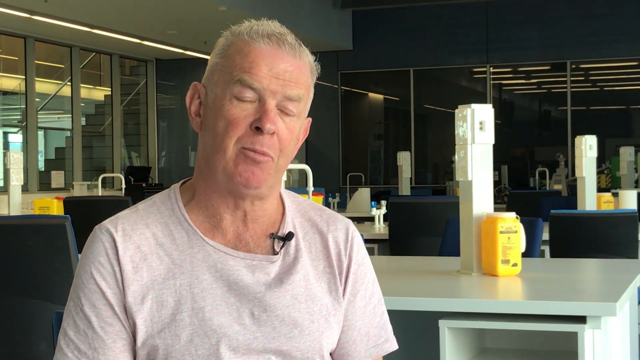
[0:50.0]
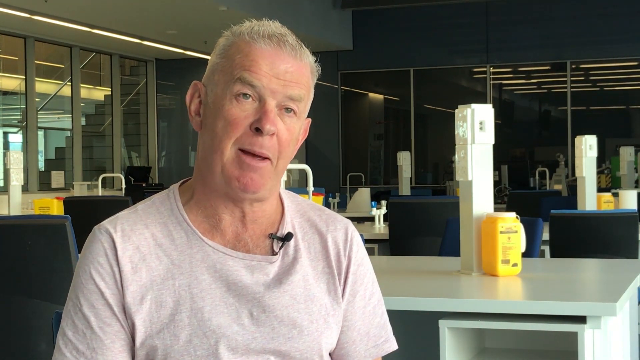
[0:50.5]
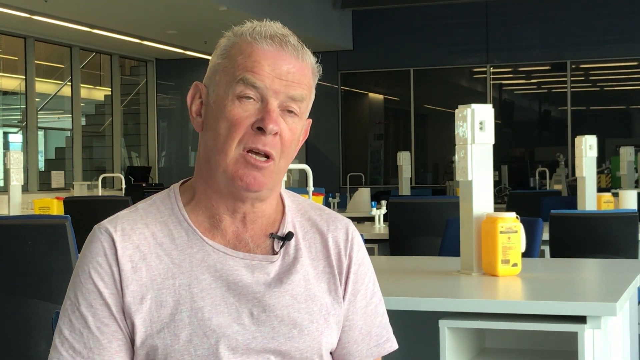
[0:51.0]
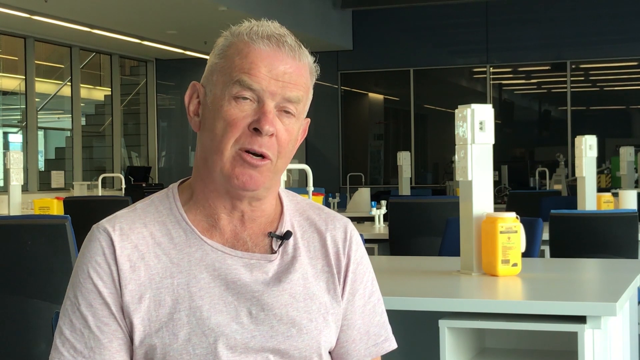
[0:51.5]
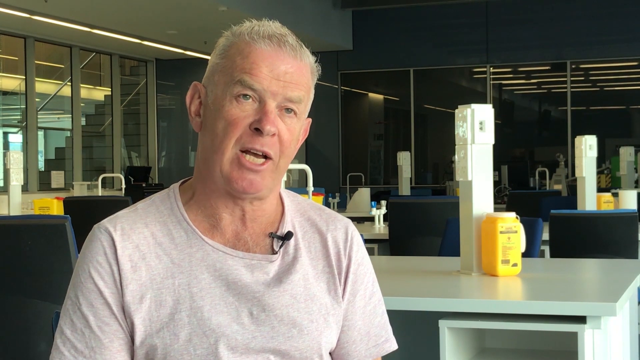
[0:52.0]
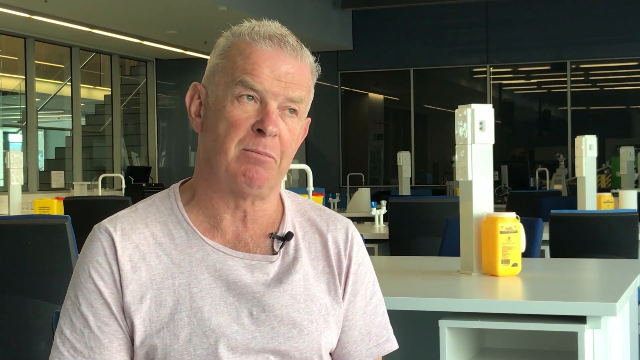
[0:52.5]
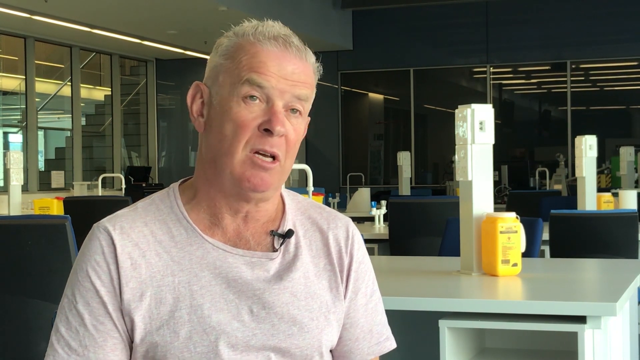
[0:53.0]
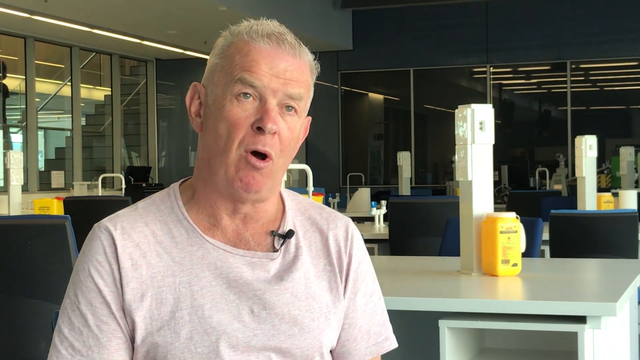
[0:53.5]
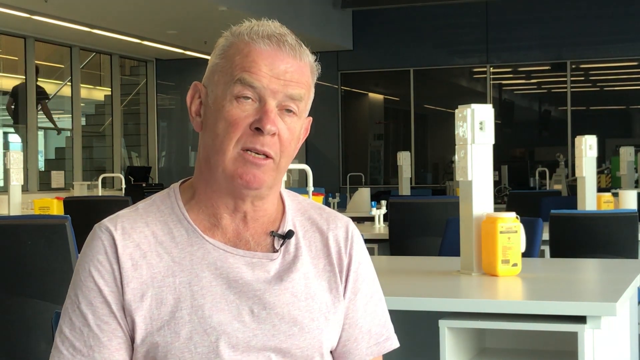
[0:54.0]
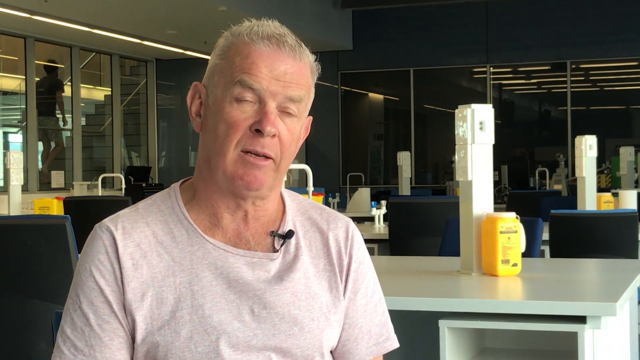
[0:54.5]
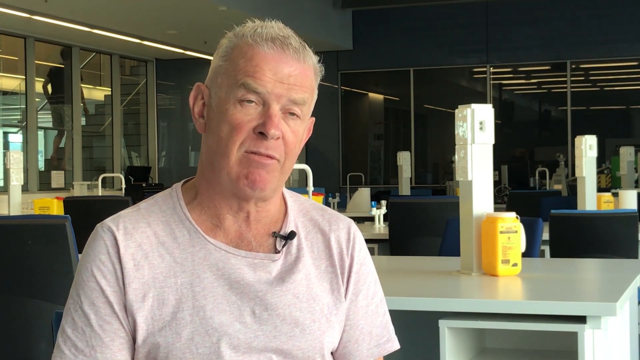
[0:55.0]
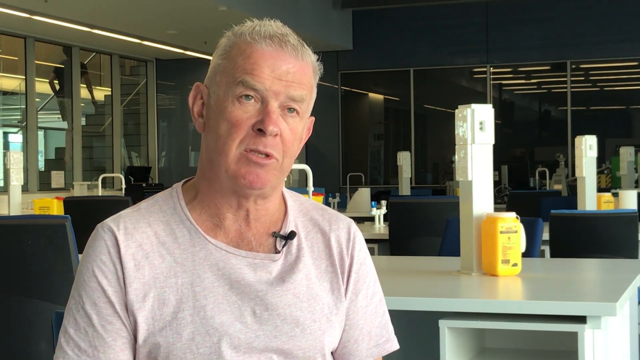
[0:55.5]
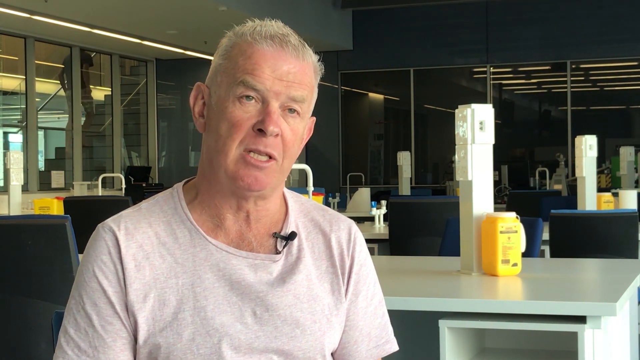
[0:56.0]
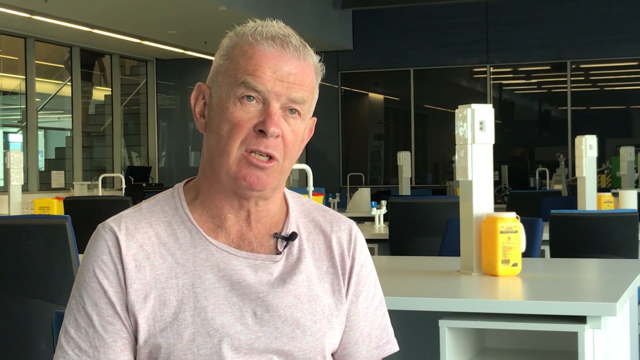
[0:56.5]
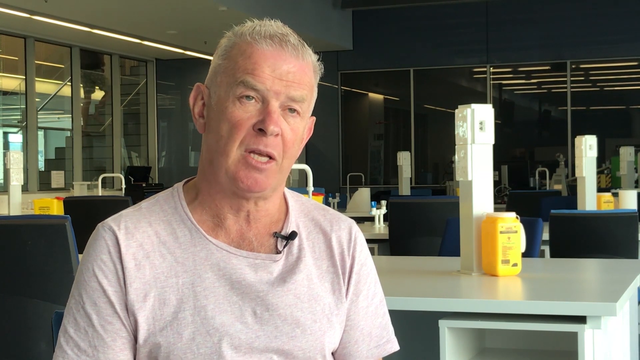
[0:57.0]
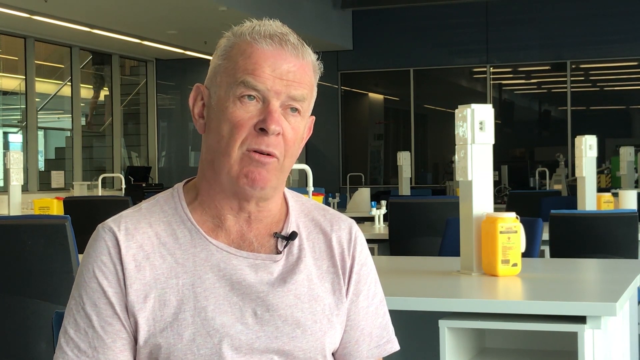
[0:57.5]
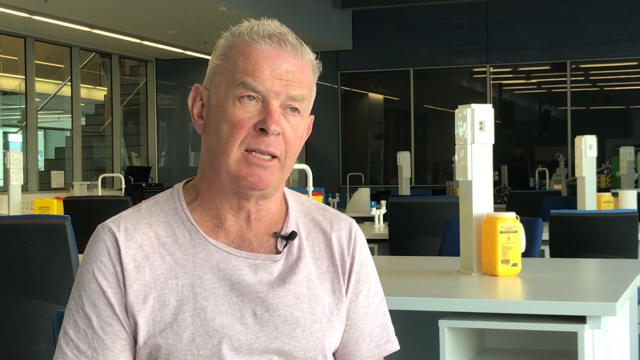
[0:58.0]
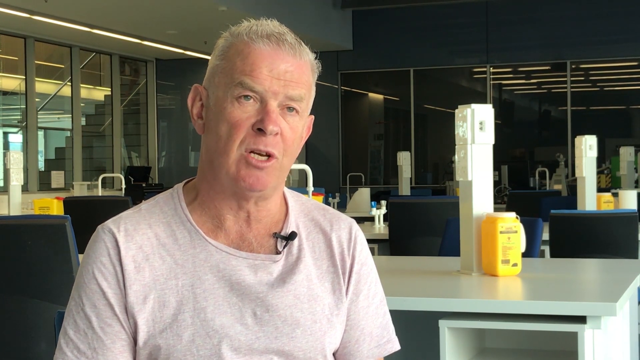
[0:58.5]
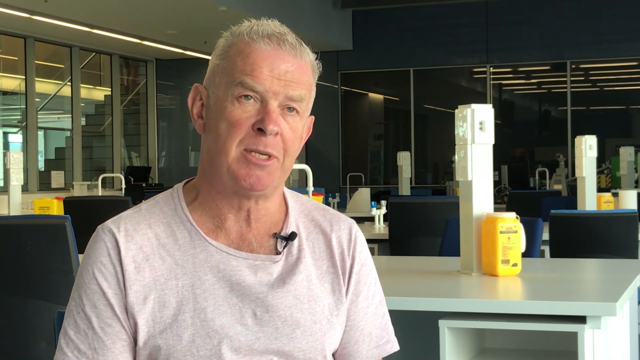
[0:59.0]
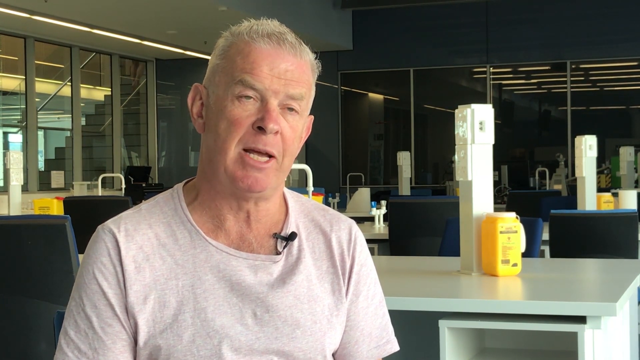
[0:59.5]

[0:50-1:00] An old man gives an interview in some kind of lab setting. Behind him are multiple workbenches, each with a yellow tub for hazardous waste disposal and a tower for ethernet plugs and various electrical plugs, all of them empty; some of the benches also have water valves. The man looks forward into the camera and talks, with a lapel microphone on his crewneck-style t-shirt. In the background is a glass wall through which a staircase is visible, and another man wearing khaki shorts, with his left hand in his pocket, slowly climbs the steps behind the glass.